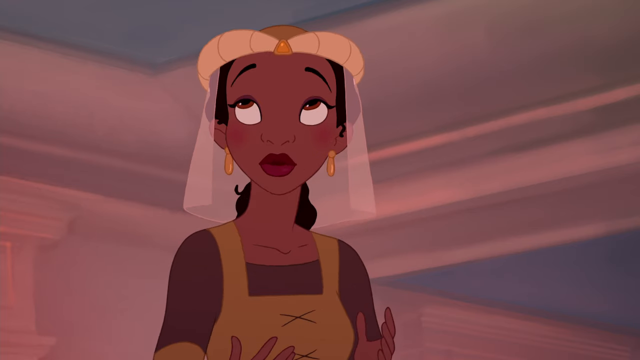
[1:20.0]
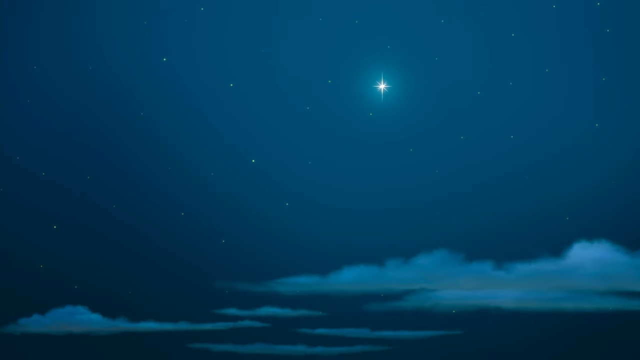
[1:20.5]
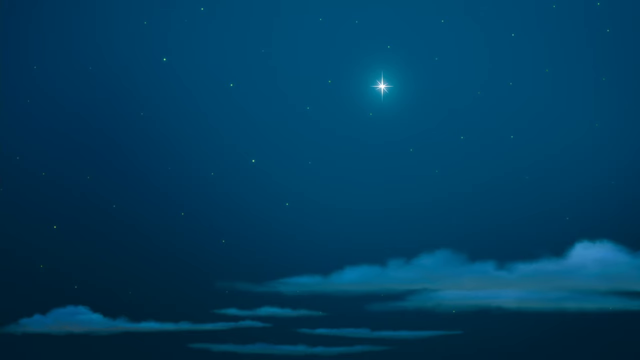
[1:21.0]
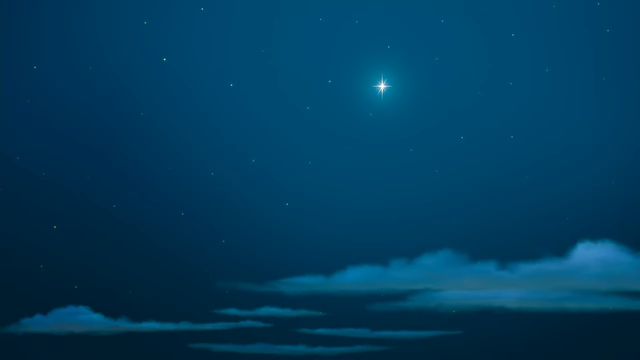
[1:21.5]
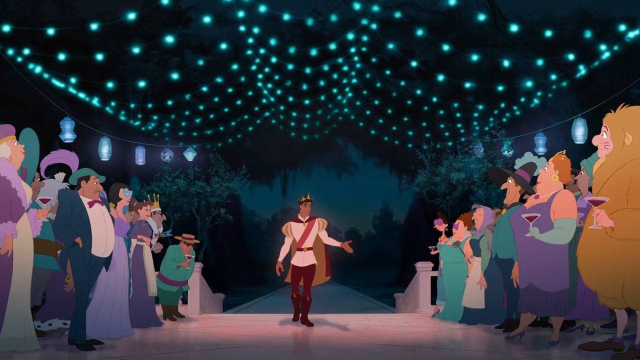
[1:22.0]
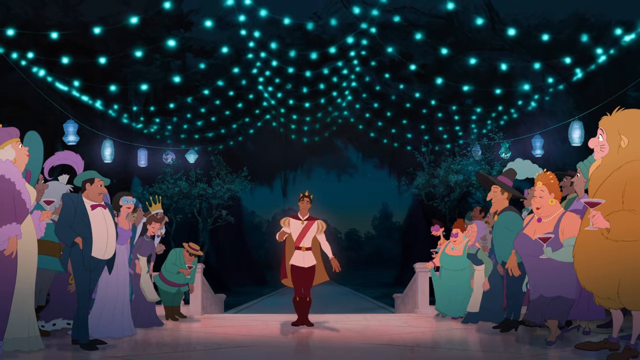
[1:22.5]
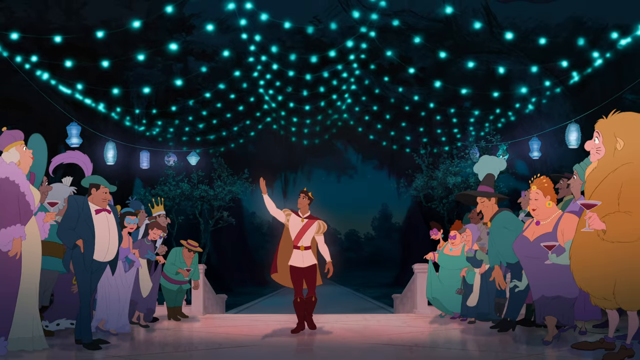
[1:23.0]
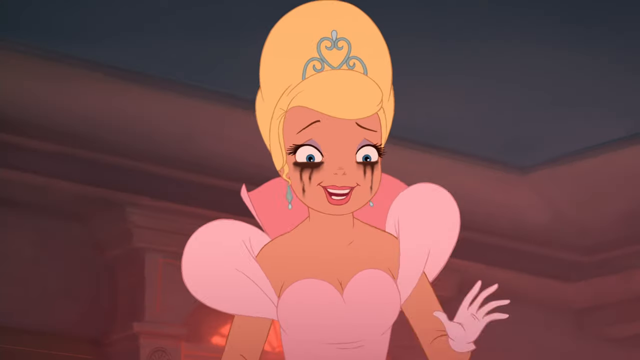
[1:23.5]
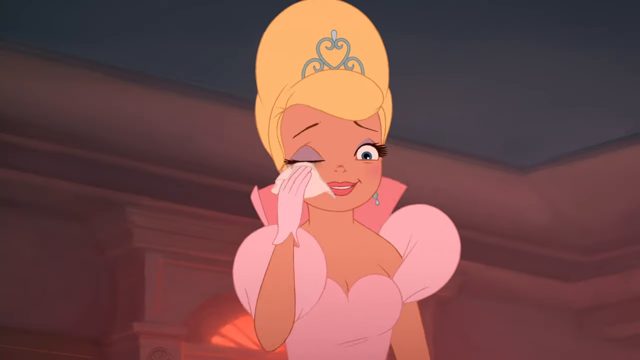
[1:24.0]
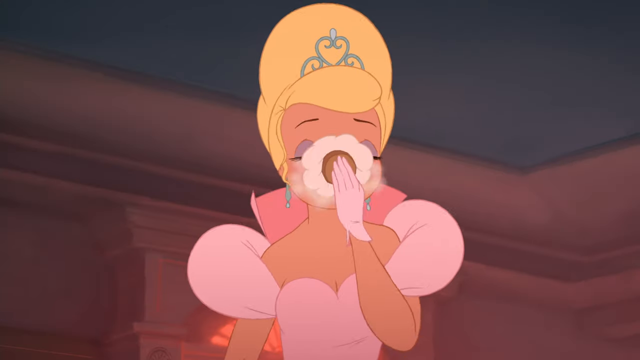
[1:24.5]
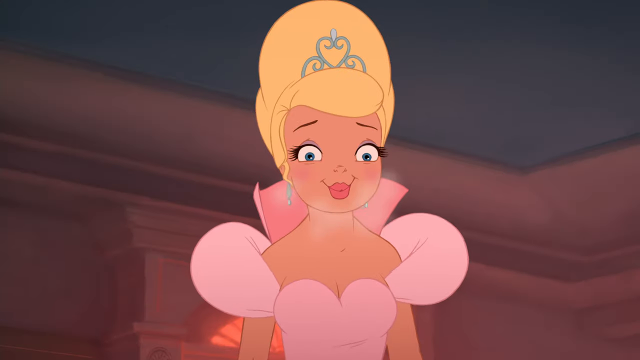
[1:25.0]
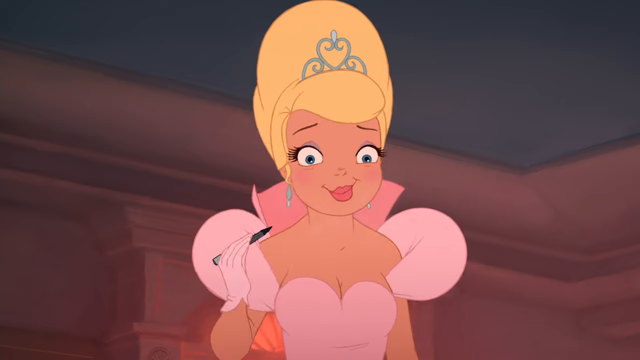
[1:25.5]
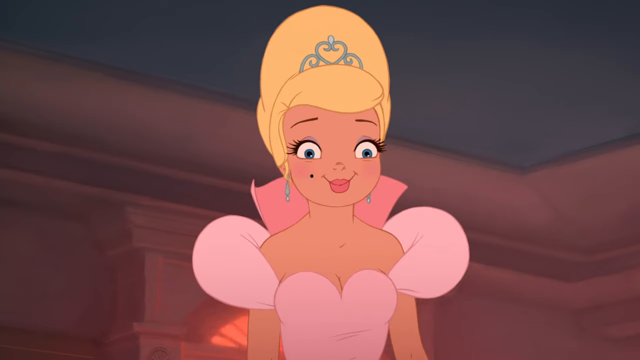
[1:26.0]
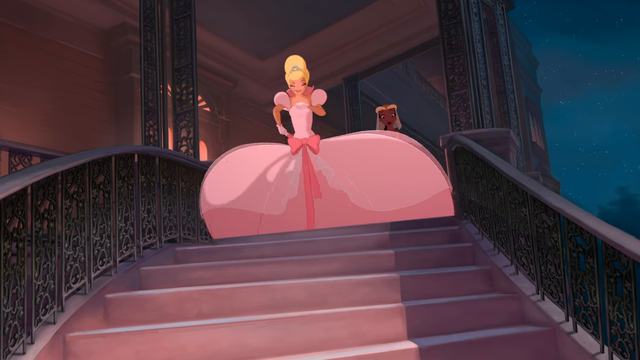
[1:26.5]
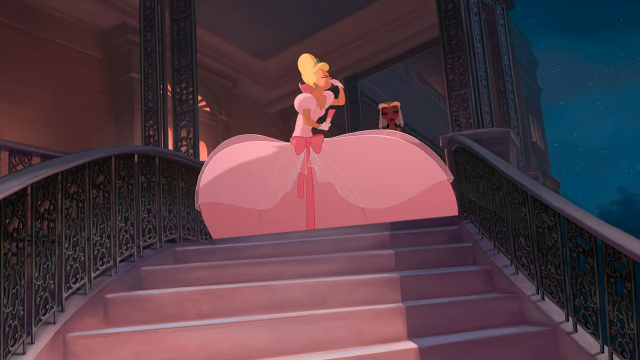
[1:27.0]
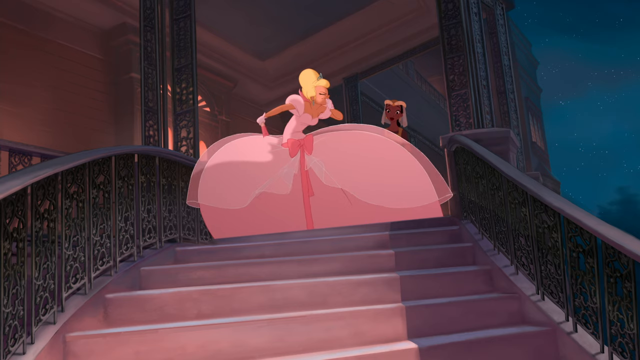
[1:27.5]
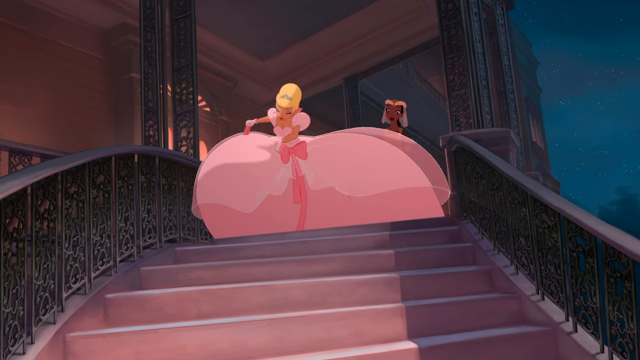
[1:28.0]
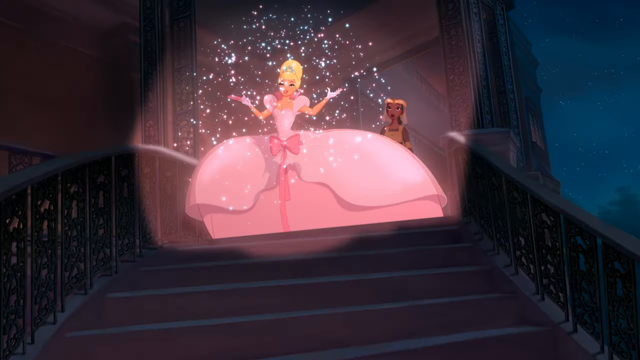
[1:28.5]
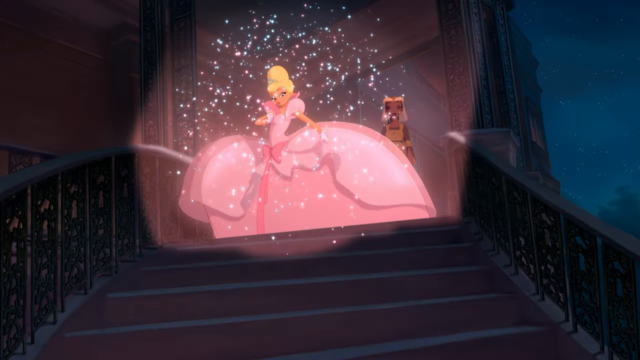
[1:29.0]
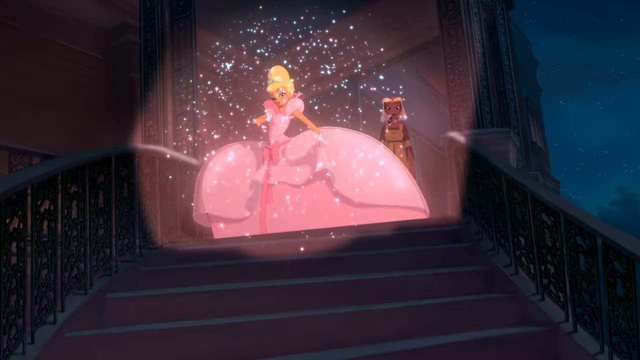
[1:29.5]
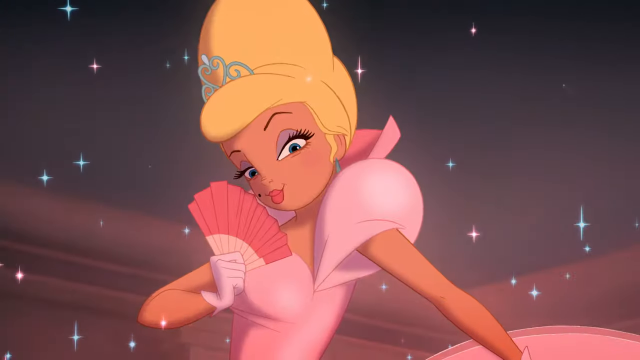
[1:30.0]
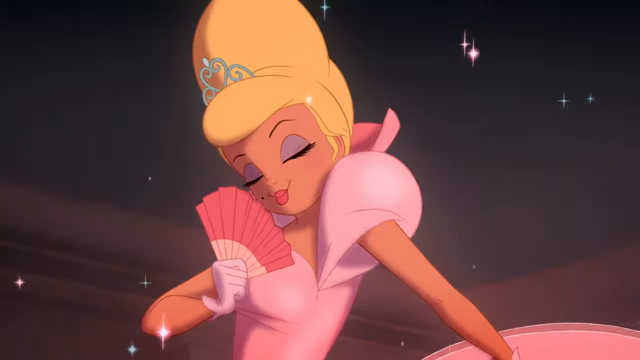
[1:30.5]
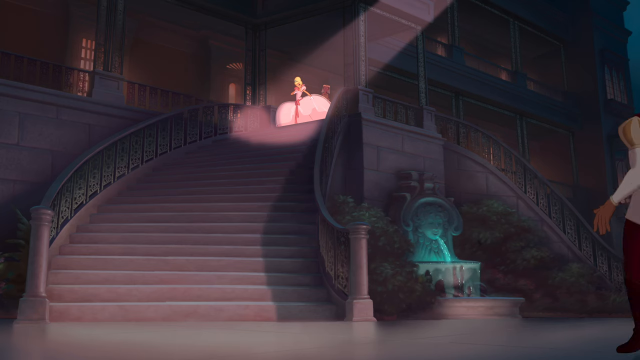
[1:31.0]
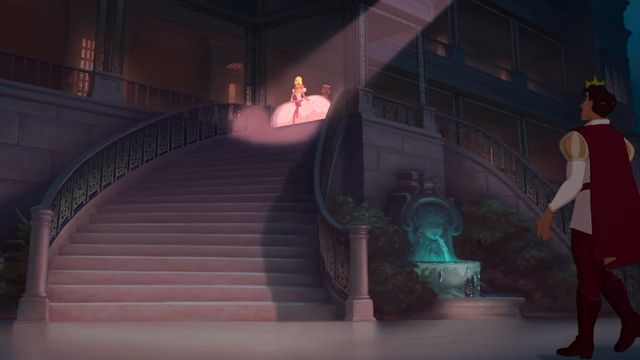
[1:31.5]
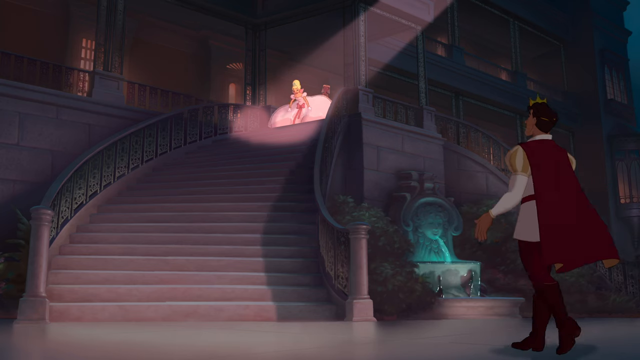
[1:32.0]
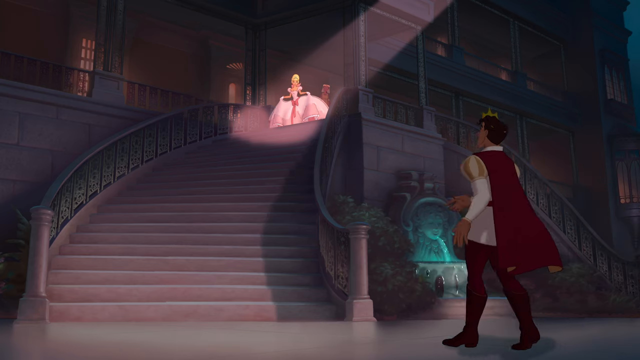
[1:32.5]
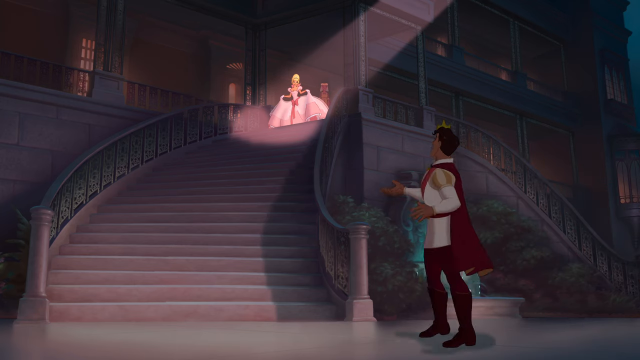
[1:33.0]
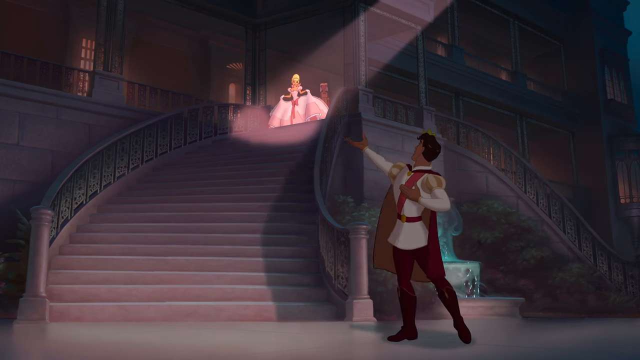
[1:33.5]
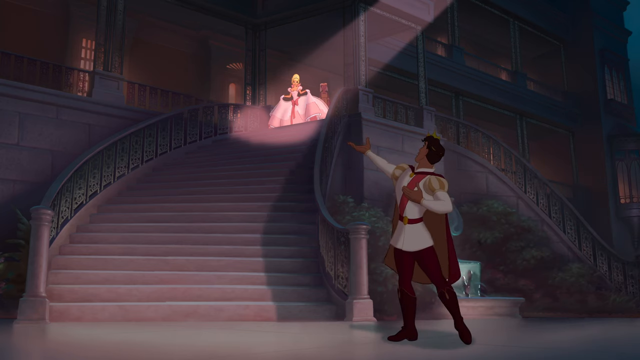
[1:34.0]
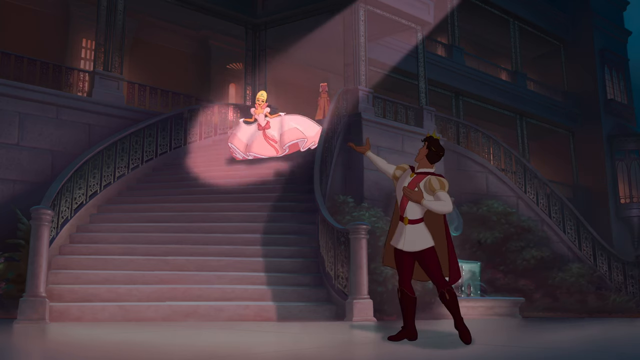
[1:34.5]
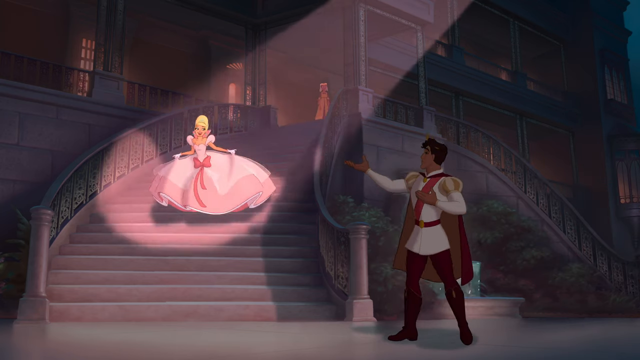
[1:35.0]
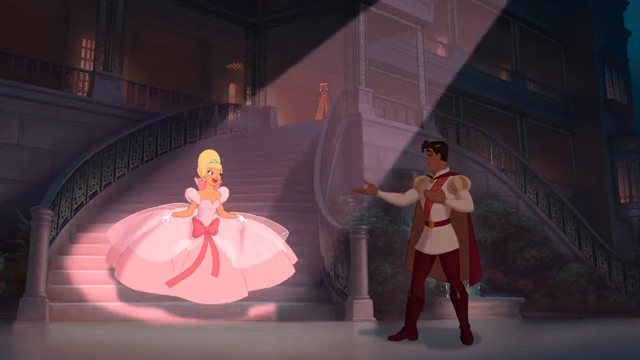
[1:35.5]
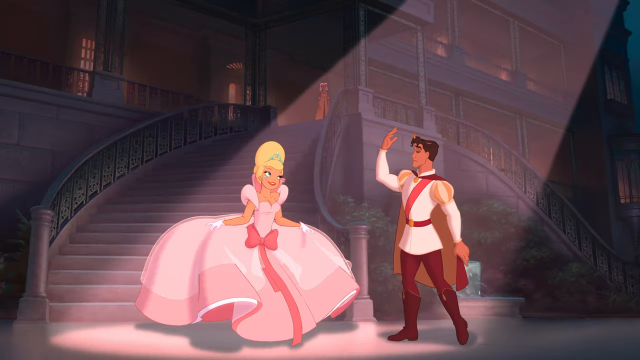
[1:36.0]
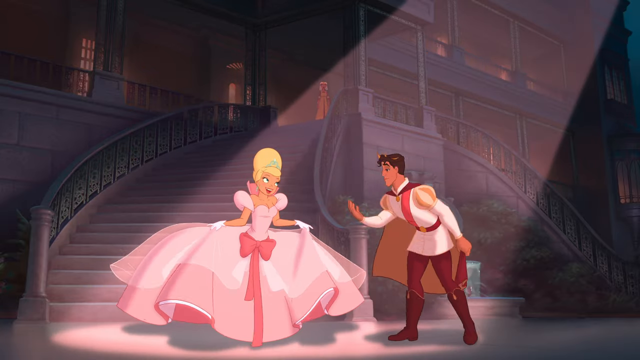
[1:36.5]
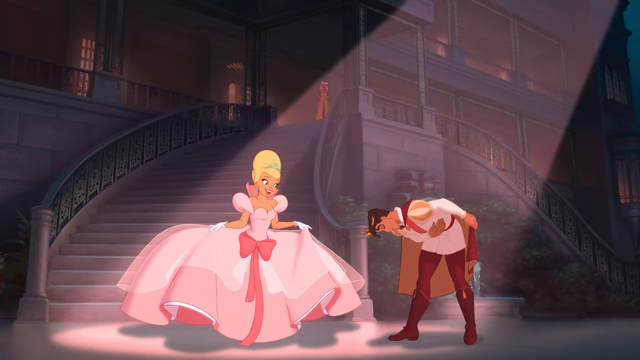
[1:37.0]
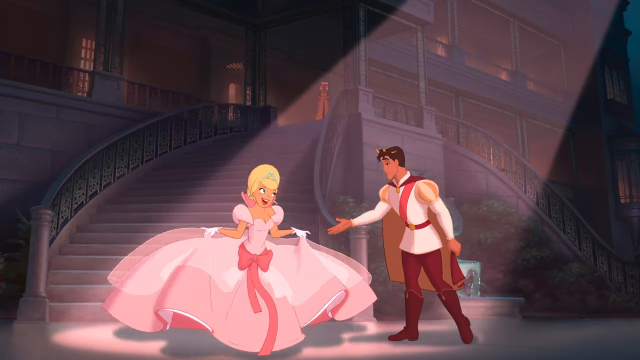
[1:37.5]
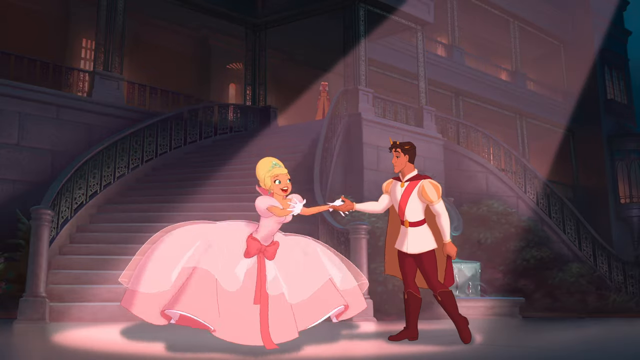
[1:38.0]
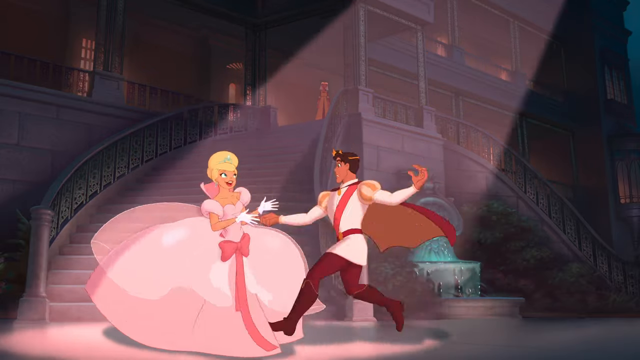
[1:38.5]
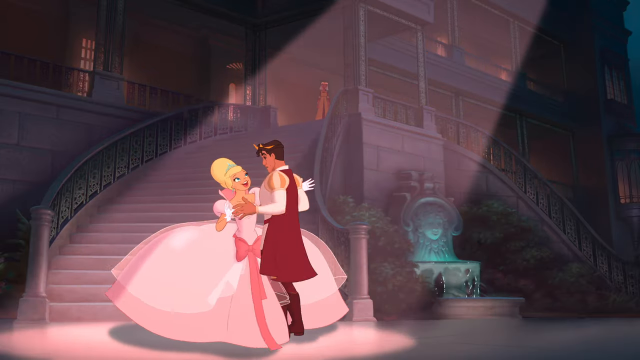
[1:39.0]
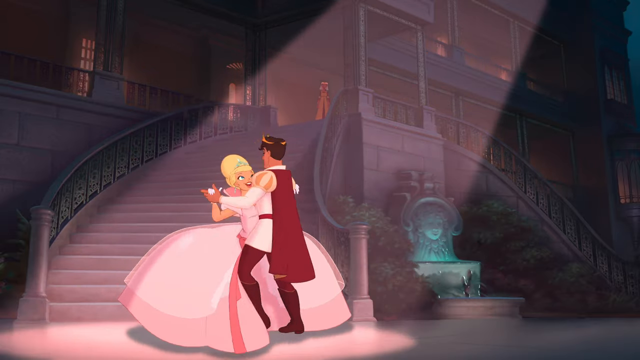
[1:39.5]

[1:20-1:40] The woman in the pink dress snatches the tiara back from the snack worker, who rolls her eyes up toward the ceiling and then looks at the star in the sky. The scene pans to the prince, who wears a white tunic top, burgundy pants, a red sash, a cape behind him that reaches down to his knees, and a crown; he is waving at the crowd. At the top of the stairs, the woman in the ball gown wipes away her tears and smiles. She quickly draws a beauty mark on her face, puts her fist to her face and throws a handful of glitter. The woman in the pink ball gown then looks perfect, with her tiara in her hair, and she takes her pink fan and looks down in a flirtatious manner. She stands in a single spotlight at the top of the stairs as the prince, still in shadow, arrives at the bottom. He bows and reaches his hand out to her, and the woman rushes down the stairs, grabs his hand, and they begin to dance.